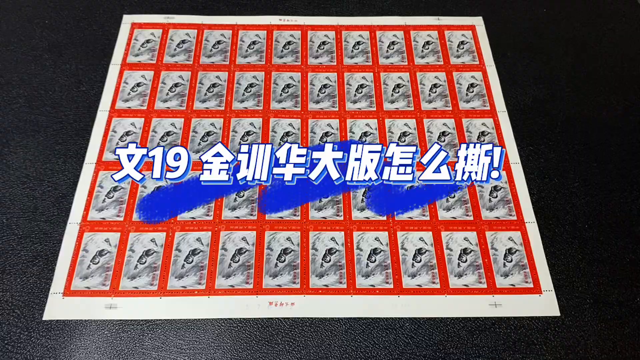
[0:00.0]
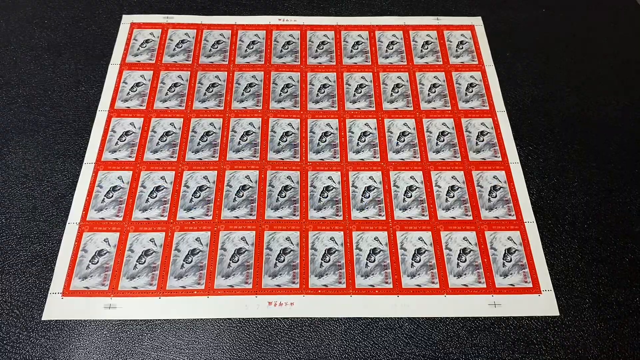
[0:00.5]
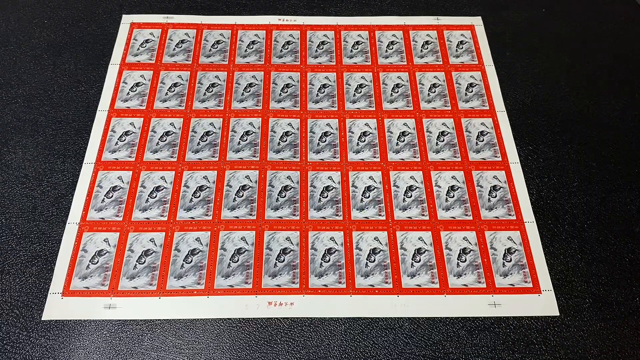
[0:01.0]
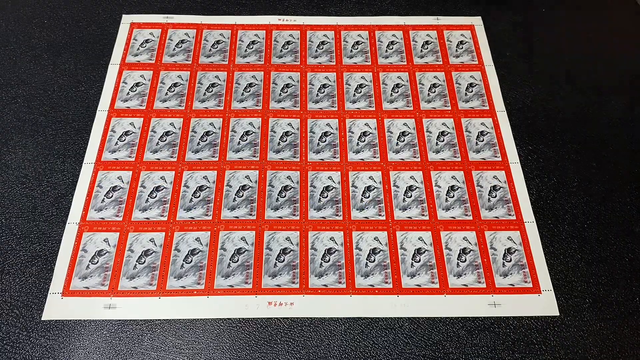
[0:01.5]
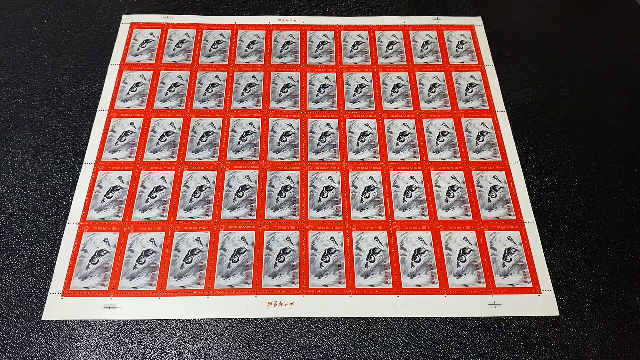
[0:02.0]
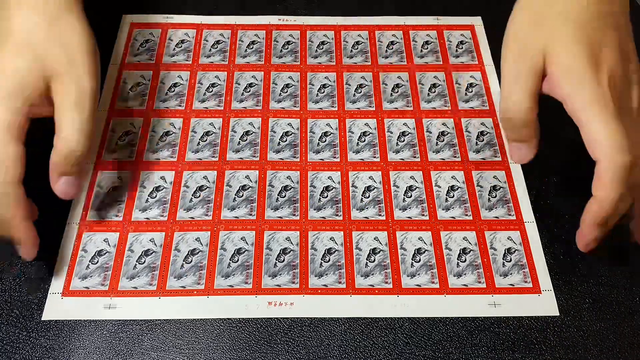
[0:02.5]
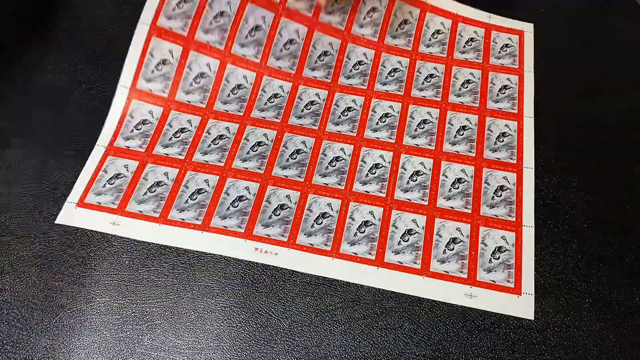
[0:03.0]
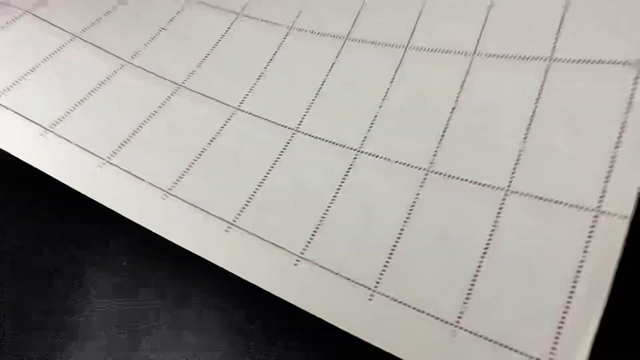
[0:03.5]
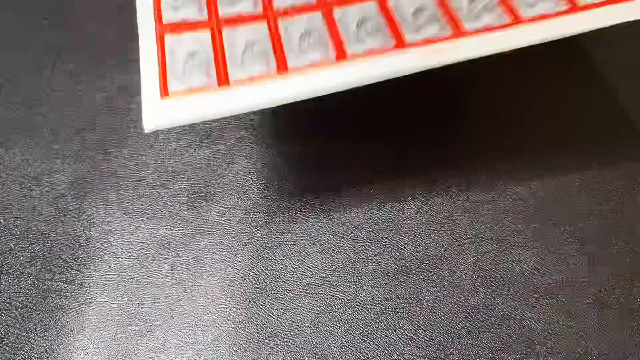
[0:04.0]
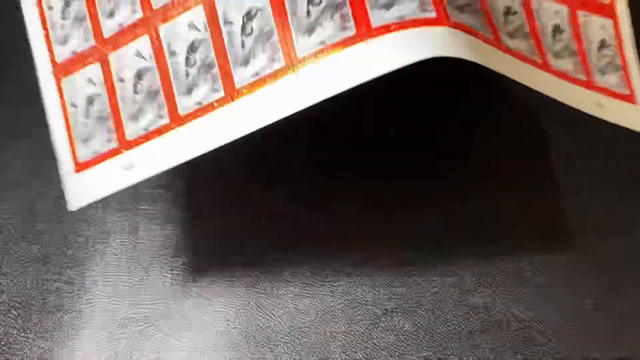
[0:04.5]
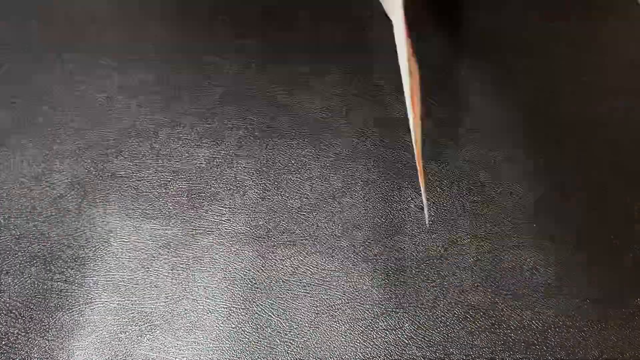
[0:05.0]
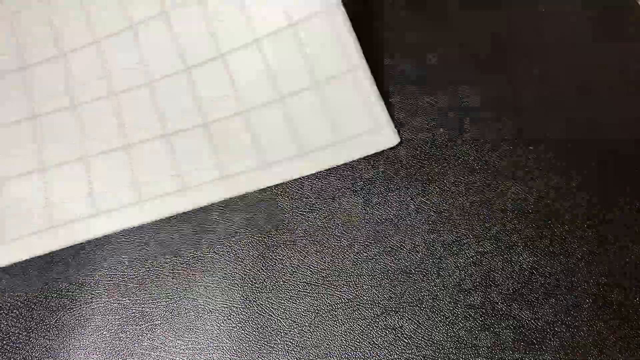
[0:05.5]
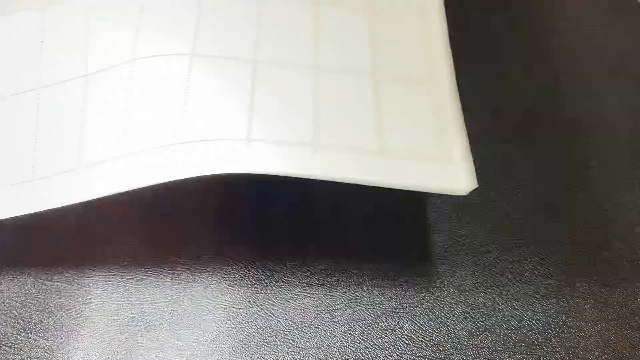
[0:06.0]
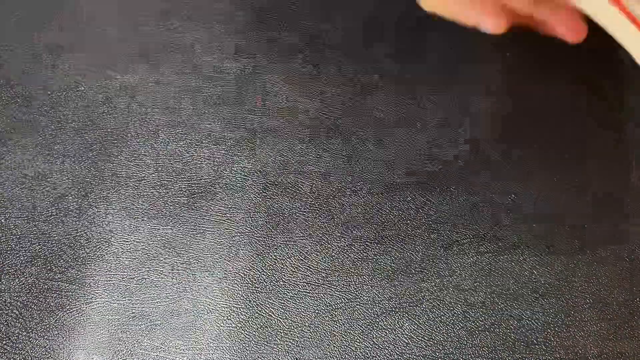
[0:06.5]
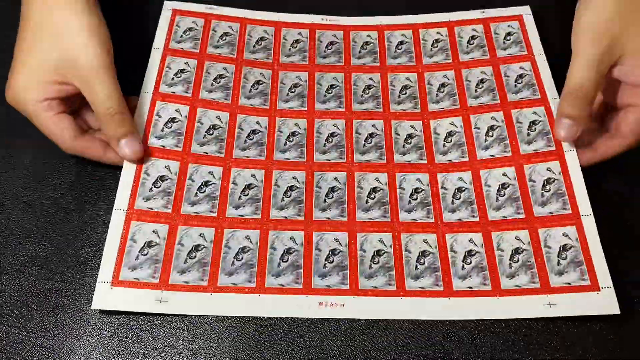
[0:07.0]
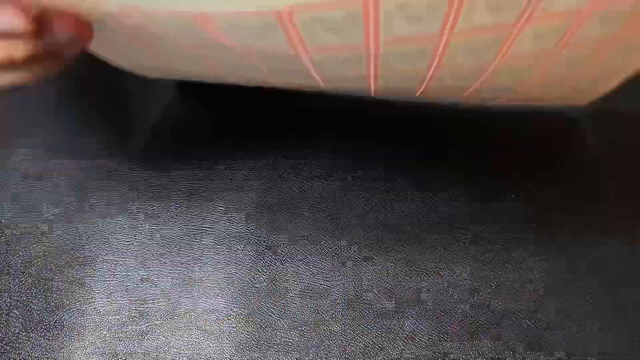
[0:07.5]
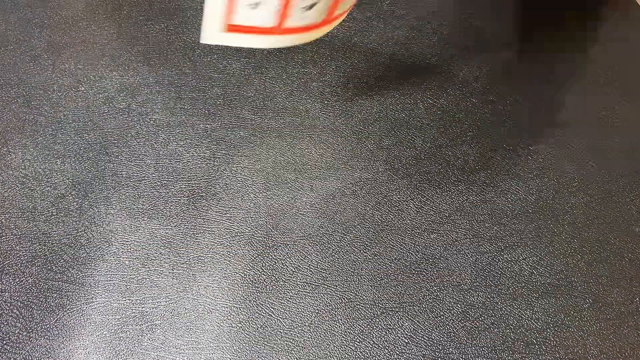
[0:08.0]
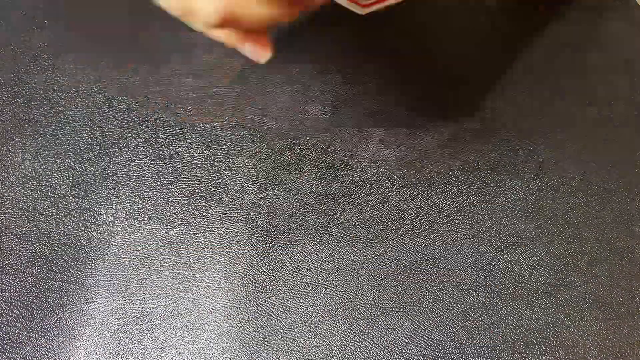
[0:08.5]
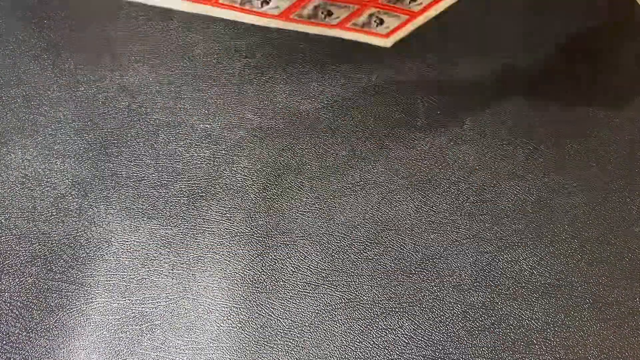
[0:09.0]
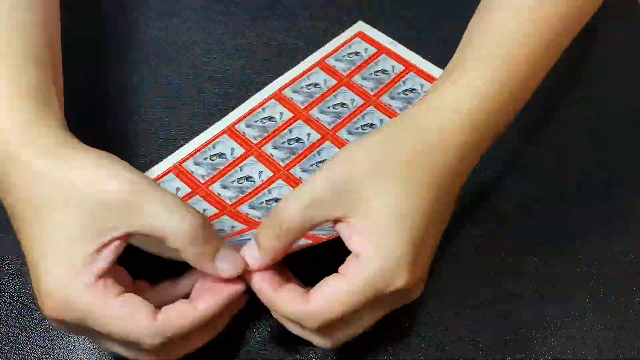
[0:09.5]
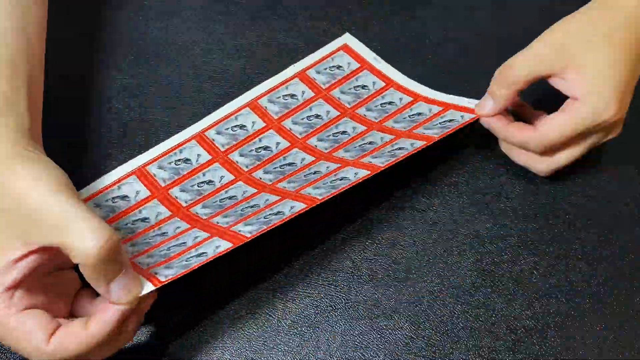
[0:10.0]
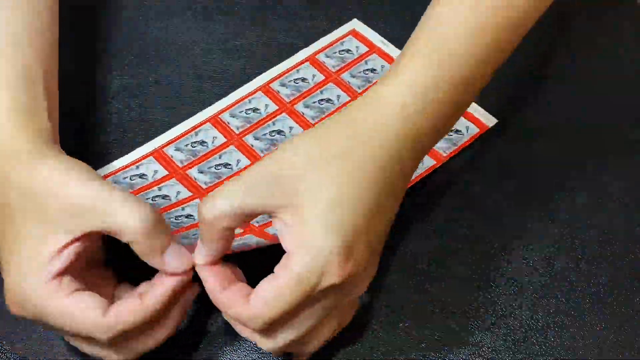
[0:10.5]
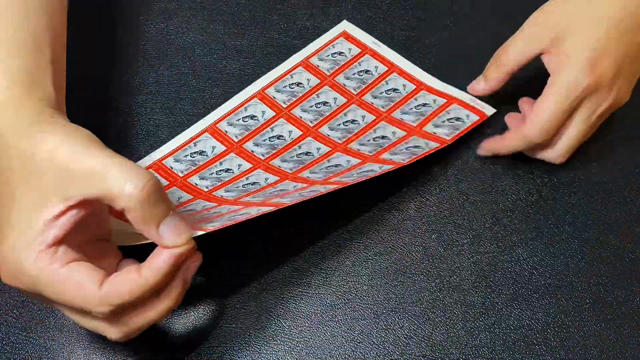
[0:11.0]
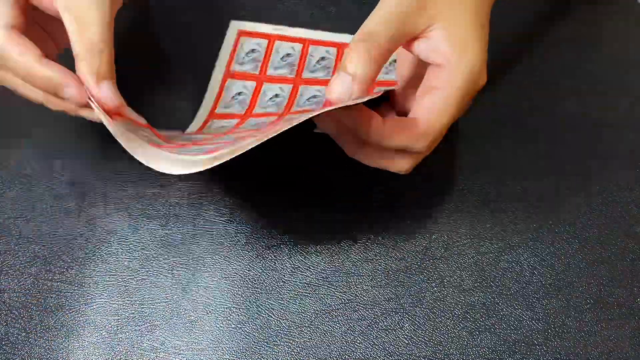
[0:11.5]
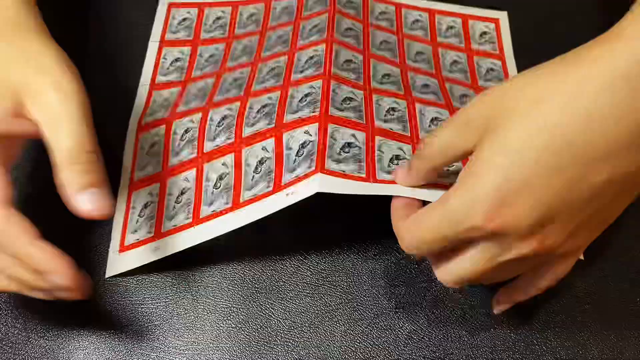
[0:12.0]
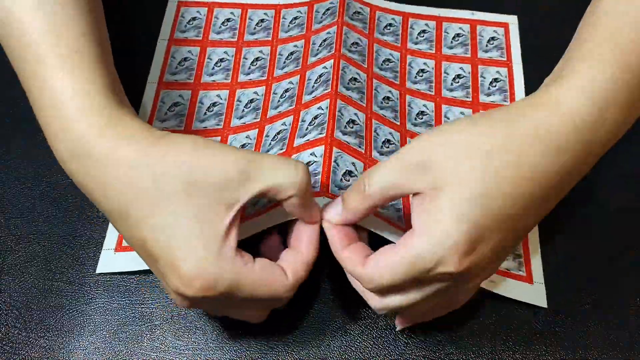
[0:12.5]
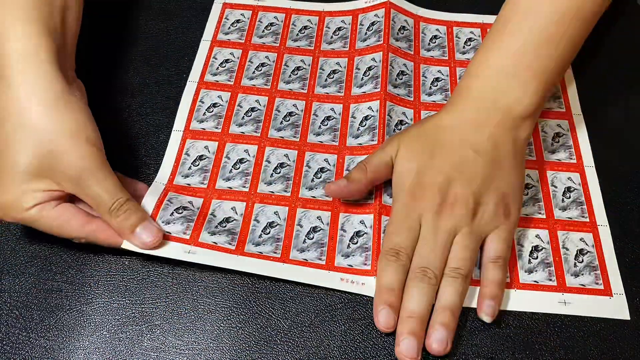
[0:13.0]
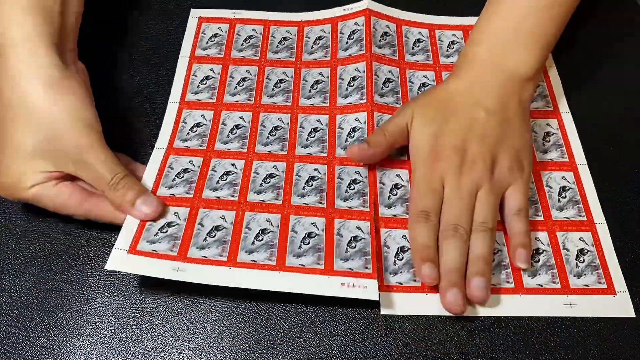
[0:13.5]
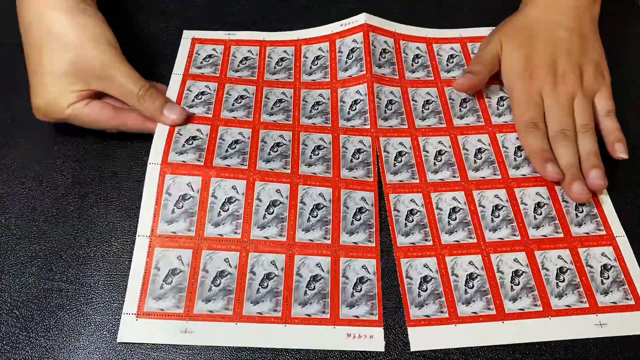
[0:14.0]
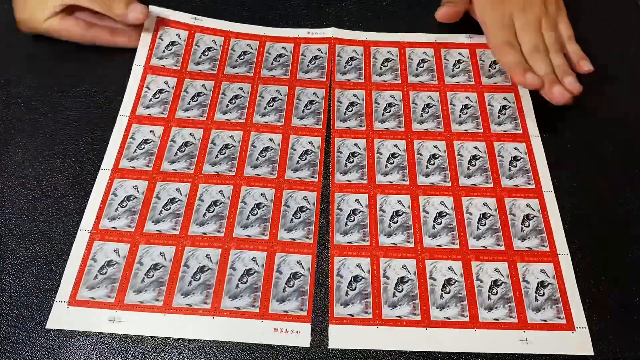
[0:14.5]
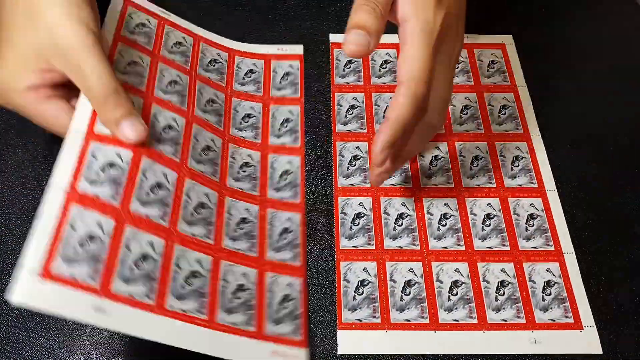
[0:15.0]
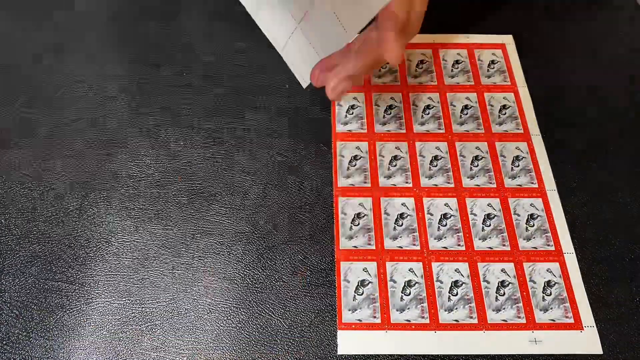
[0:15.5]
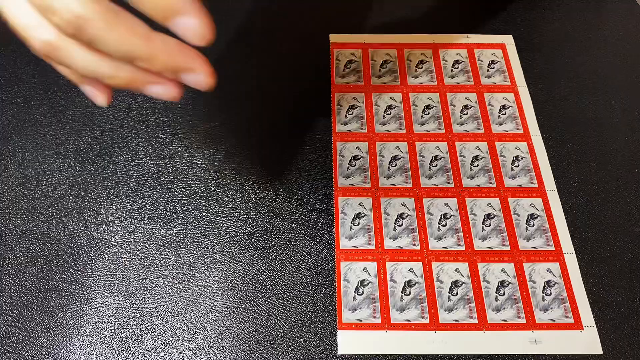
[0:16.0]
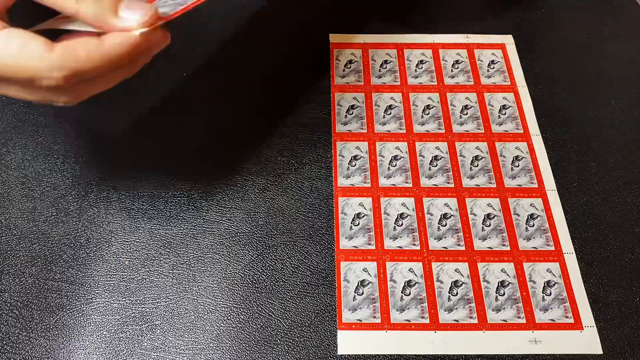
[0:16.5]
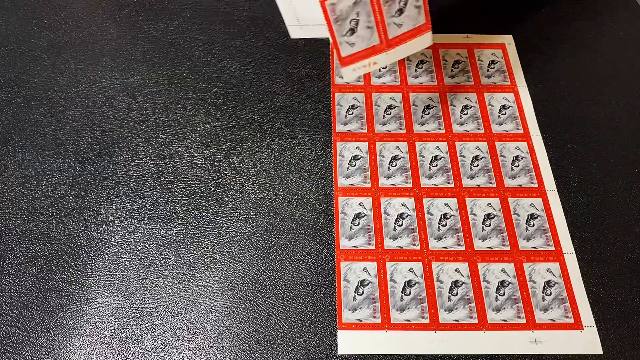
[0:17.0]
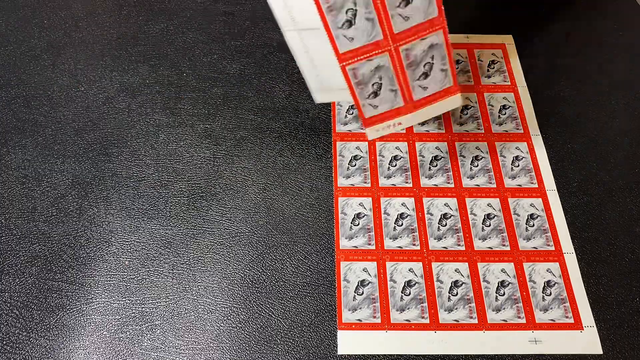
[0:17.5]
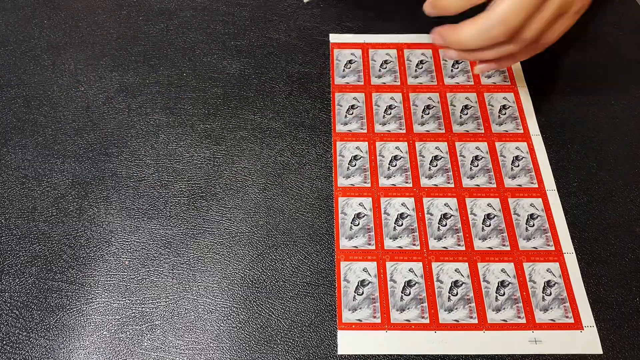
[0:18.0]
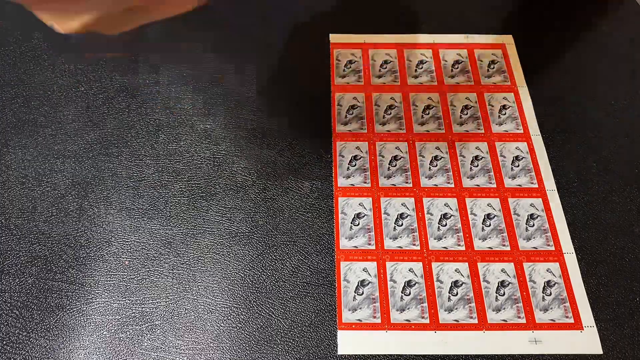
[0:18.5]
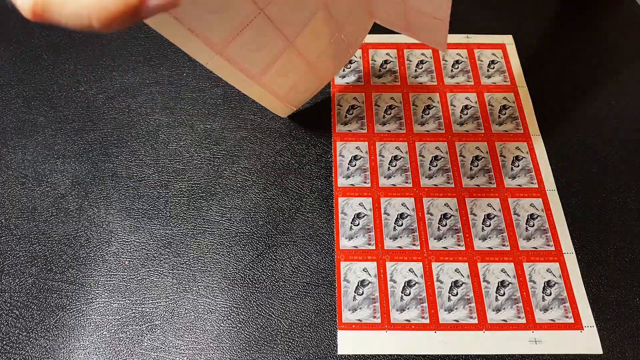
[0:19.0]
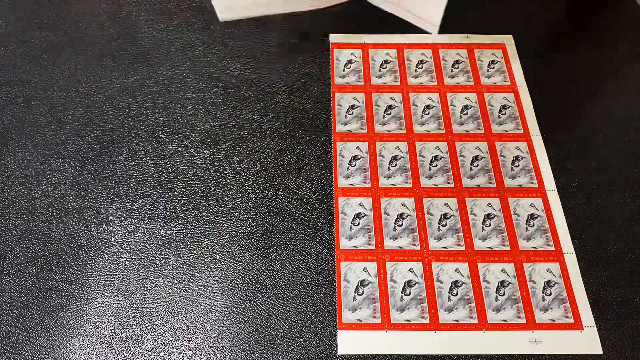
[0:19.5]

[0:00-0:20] Big white text that appears to be in Chinese is on the screen, with a 19 within the text. In the background there appears to be a board of some sort, perhaps a game board. It is rectangular with a white border and is split into 5 by 10 rectangular little sections separated by thin red borders. Inside each section there appears to be a black and white image. A hand appears and flips the board over a few times. The video appears to be sped up, perhaps to 4x speed. The person folds the board into halves and uses his finger to crease the paper. He unfolds it and rips it down the middle, splitting it into two identical rectangular pieces, then folds those pieces lengthwise.